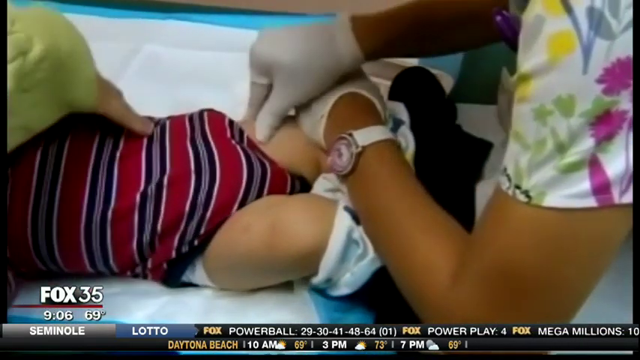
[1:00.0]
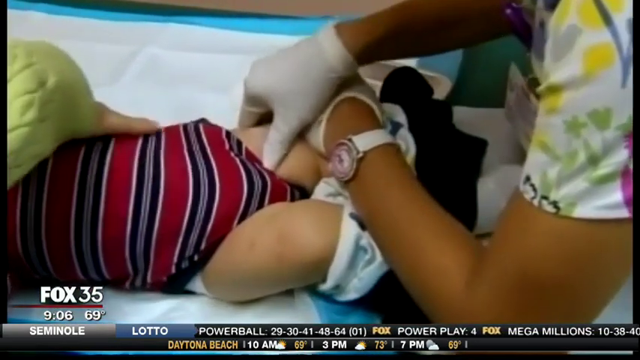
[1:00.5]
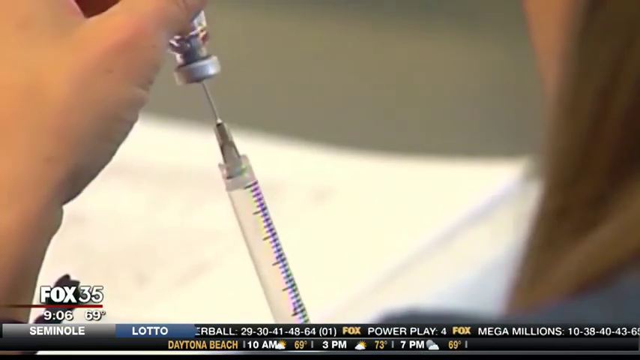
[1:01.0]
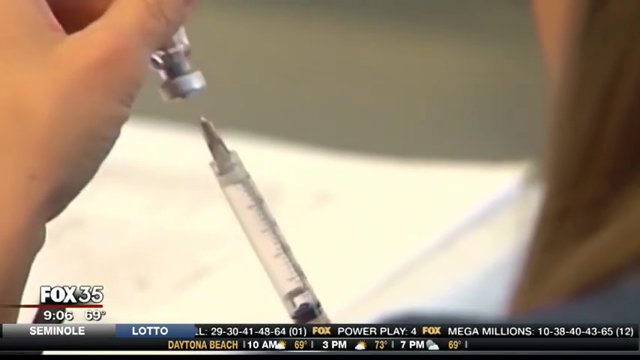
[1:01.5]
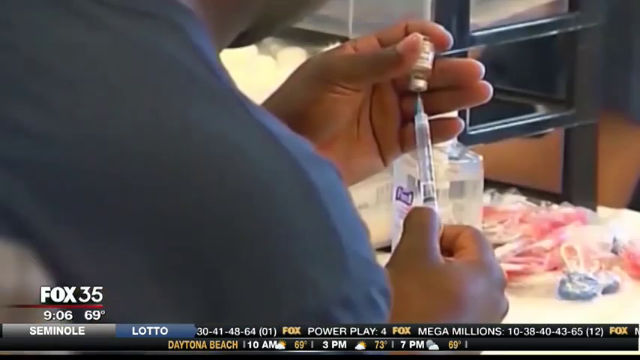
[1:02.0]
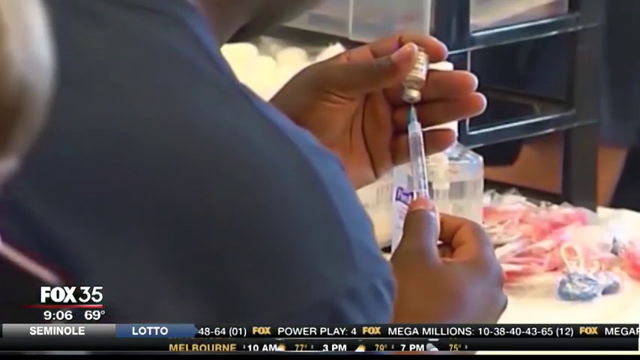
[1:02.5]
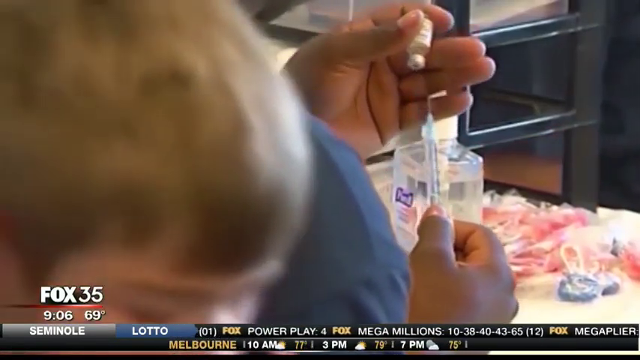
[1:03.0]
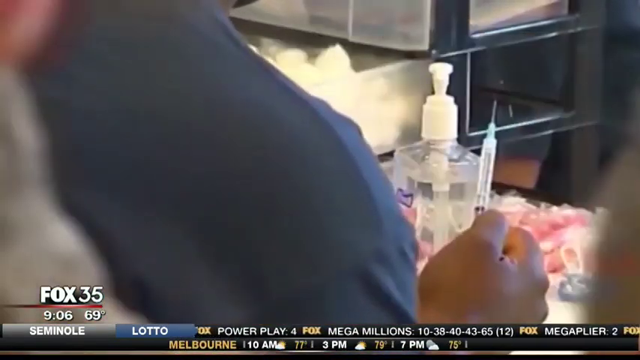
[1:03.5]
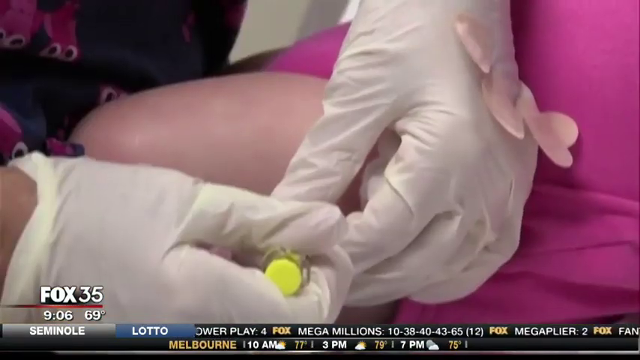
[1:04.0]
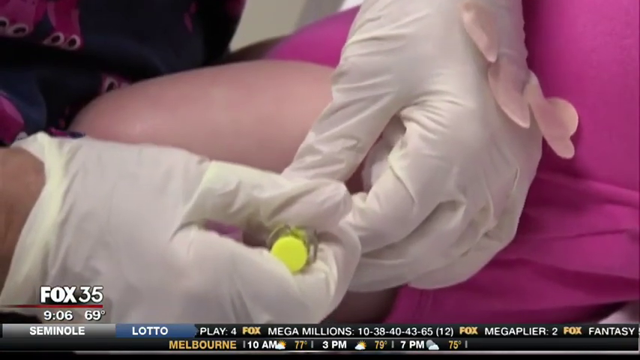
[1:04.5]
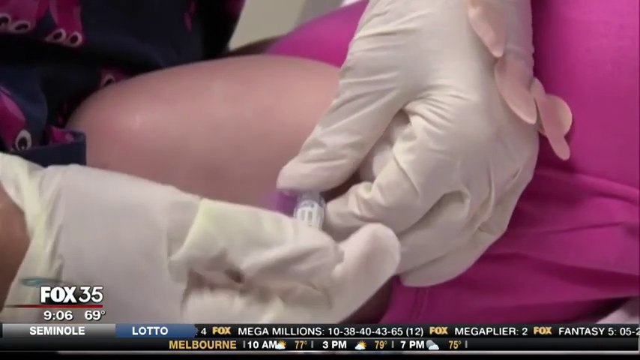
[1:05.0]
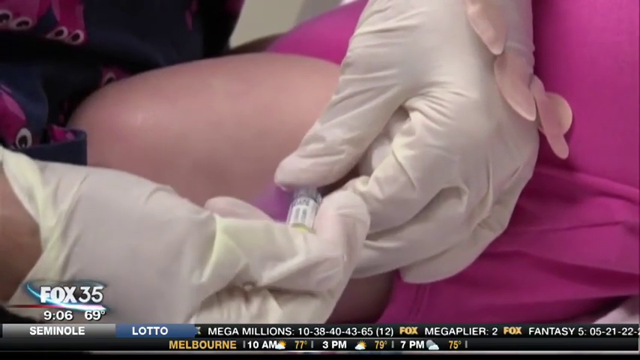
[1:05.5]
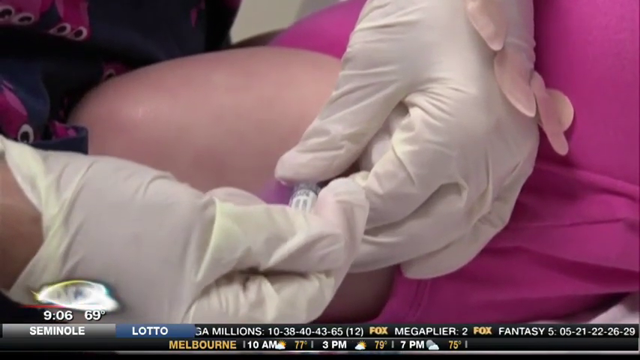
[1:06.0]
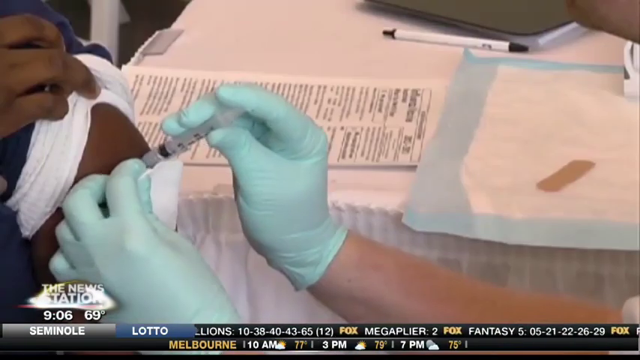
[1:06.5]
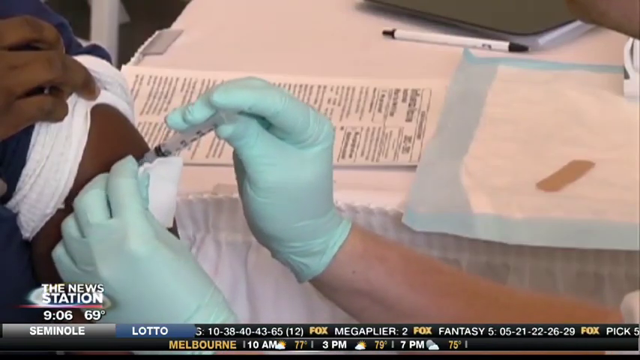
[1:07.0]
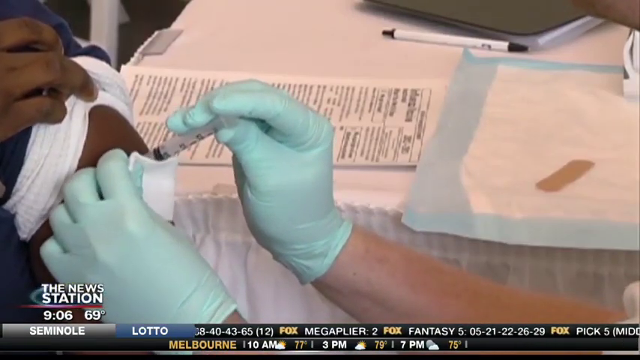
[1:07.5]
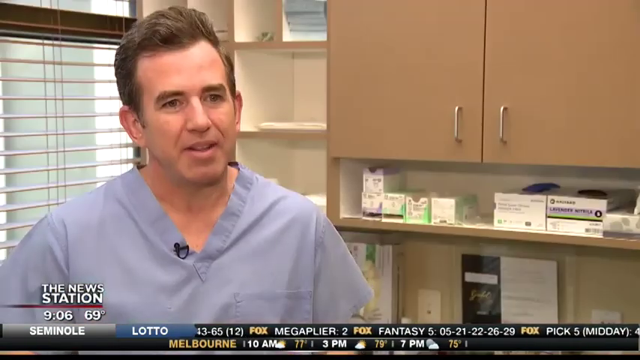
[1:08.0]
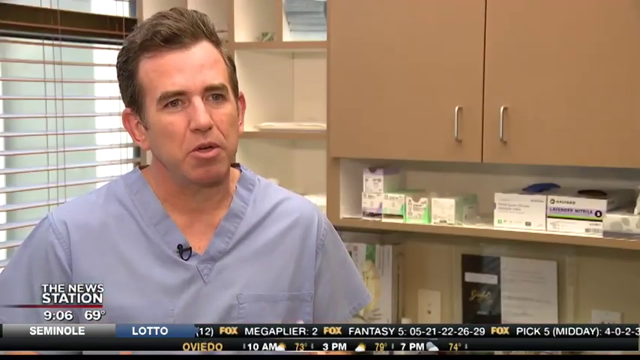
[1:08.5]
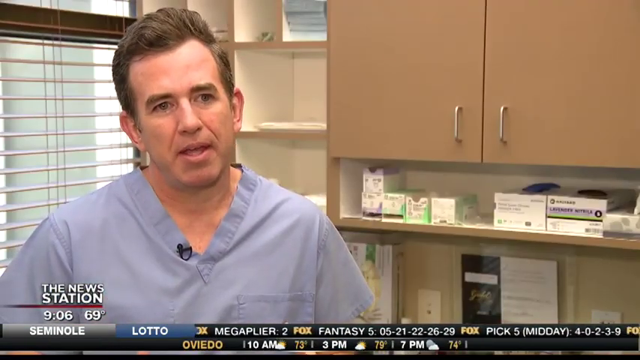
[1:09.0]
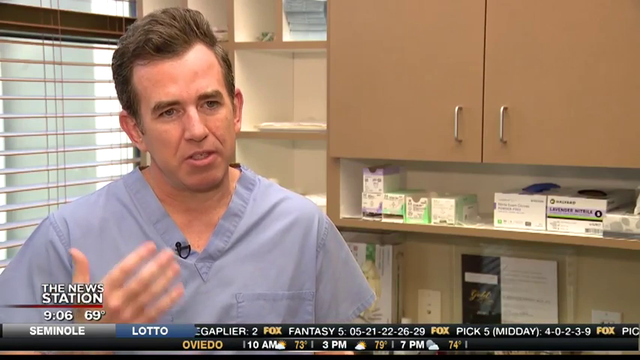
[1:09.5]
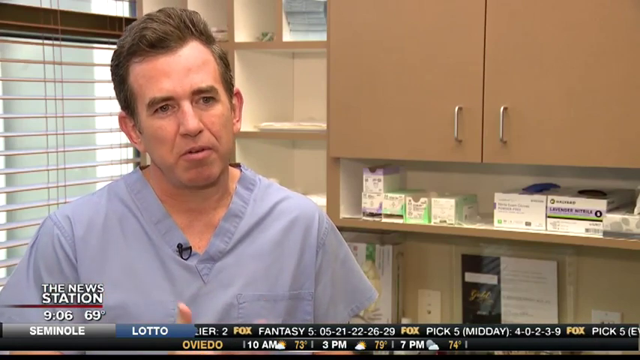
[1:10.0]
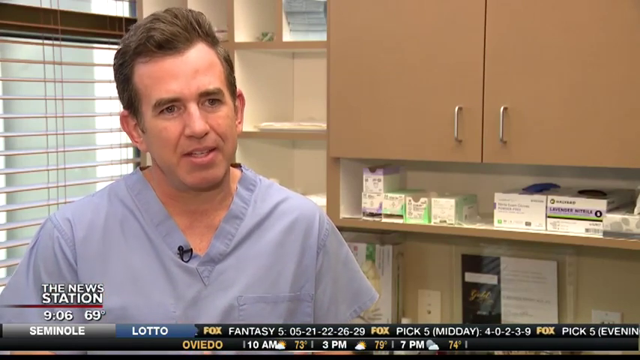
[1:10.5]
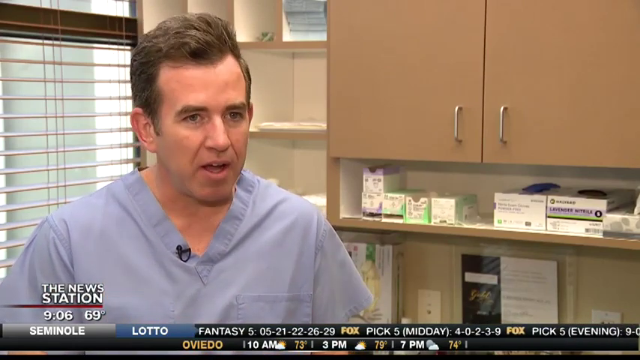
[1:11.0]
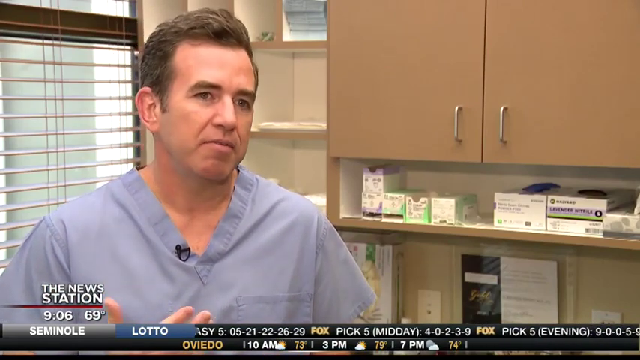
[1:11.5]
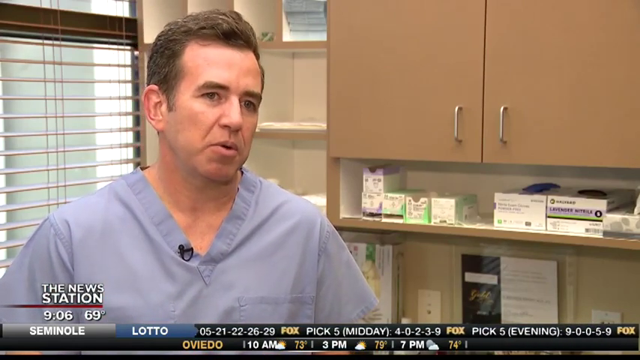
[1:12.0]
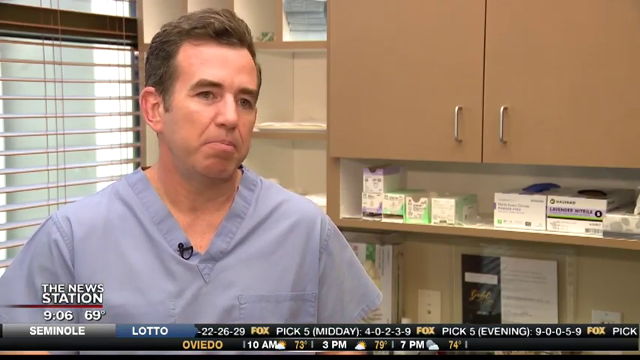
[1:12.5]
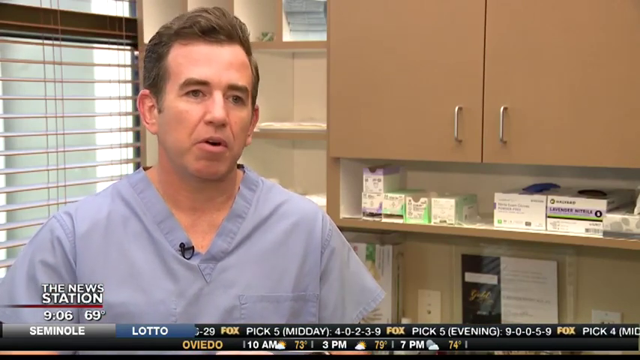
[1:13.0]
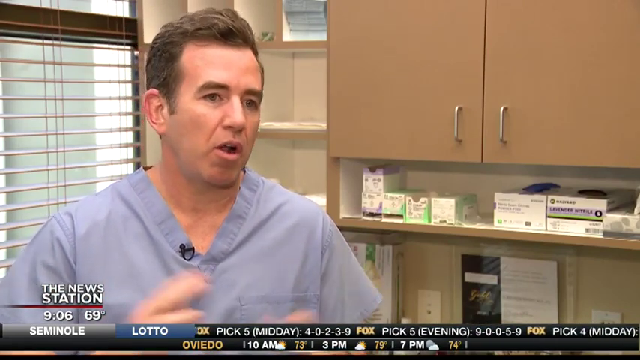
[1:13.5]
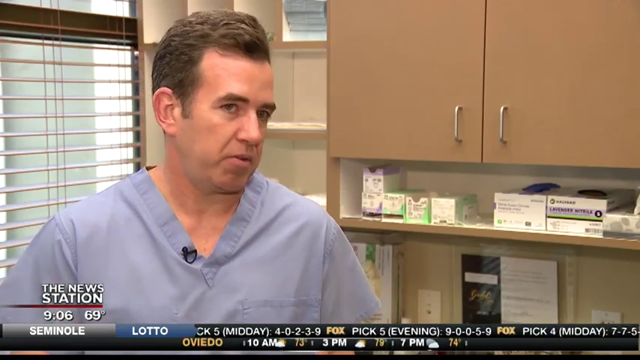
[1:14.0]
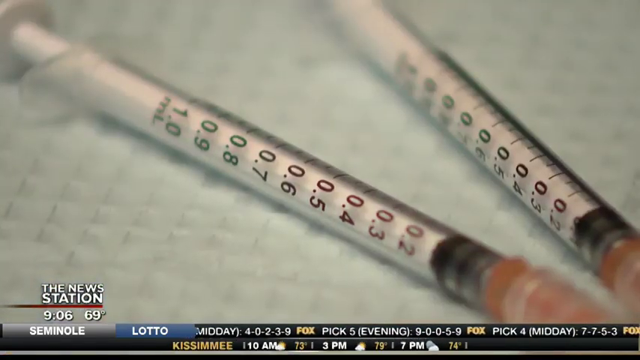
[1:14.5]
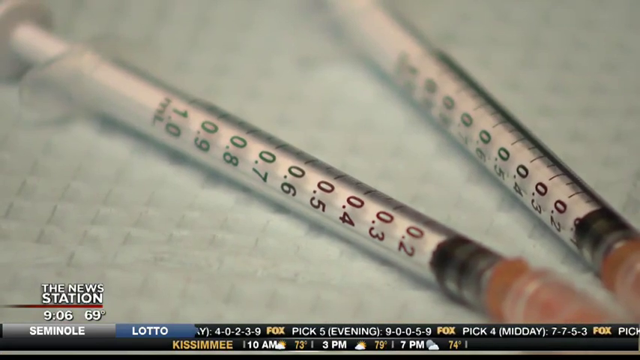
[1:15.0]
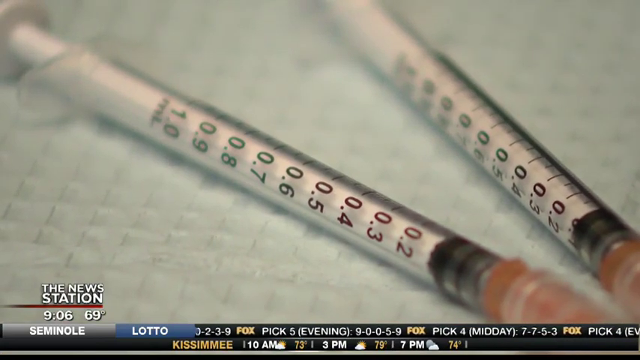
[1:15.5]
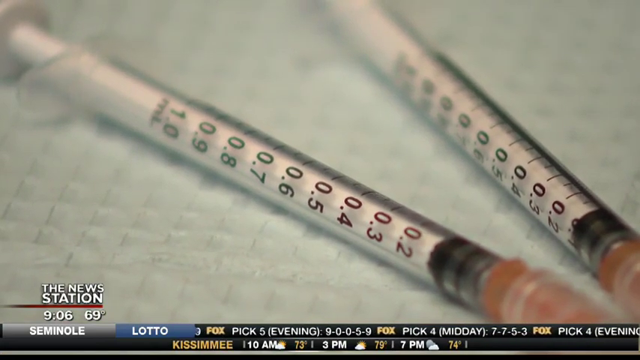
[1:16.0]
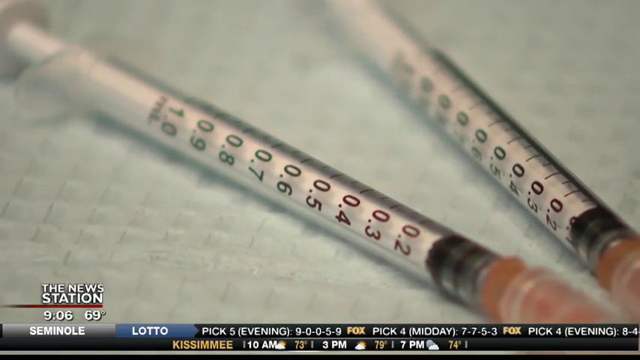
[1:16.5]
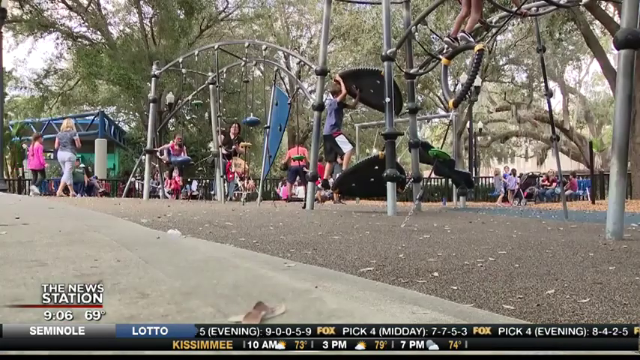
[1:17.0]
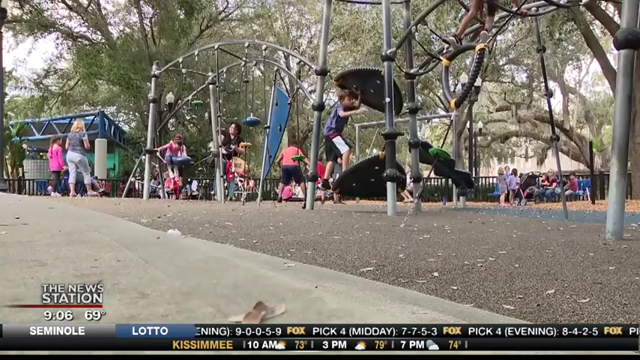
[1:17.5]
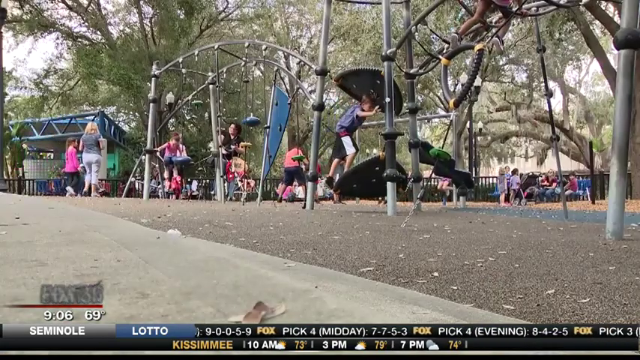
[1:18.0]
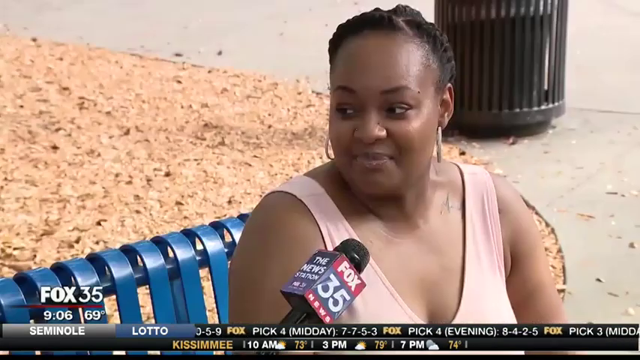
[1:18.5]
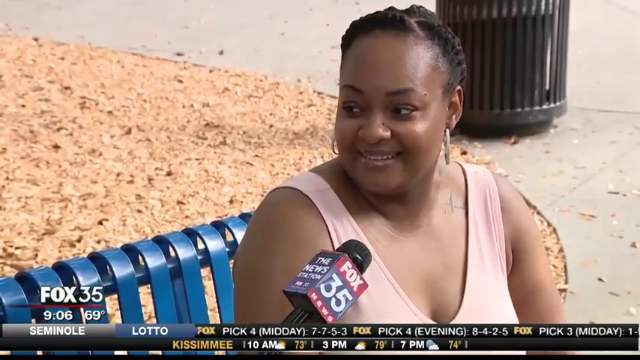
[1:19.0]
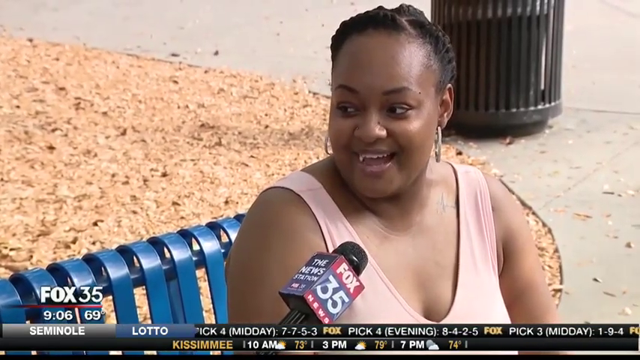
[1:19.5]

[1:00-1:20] The nurse continues giving the baby the vaccination shot in the thigh. The video cuts to a nurse extracting medicine from a vial with a hypodermic needle, then to a different nurse also extracting medicine from a vial with a hypodermic needle. Next, a pair of gloved hands gives a child a shot in the thigh; the child seems to be a girl wearing a pink dress. Then a pair of green-gloved hands wearing medical gloves gives an African American person a vaccination in the shoulder. The doctor speaks to the camera again, wearing the blue scrub shirt with a microphone clipped to the right side of the V-neck, while a ticker with lotto results scrolls across the bottom of the screen. The scene switches to a playground with many children playing and adults supervising, and then to the woman who was sitting on the park bench, saying a few last words to the camera.